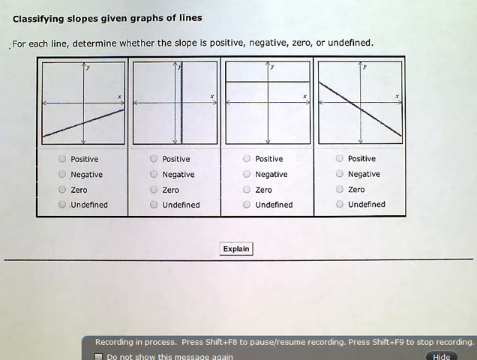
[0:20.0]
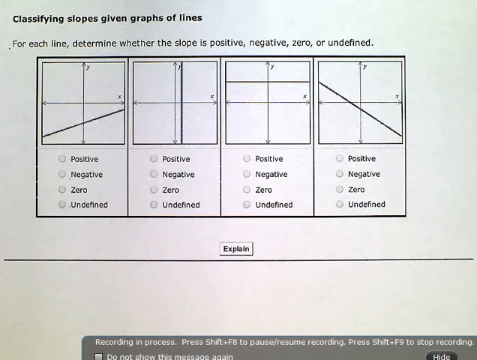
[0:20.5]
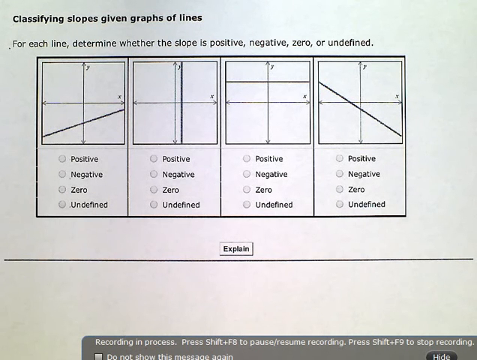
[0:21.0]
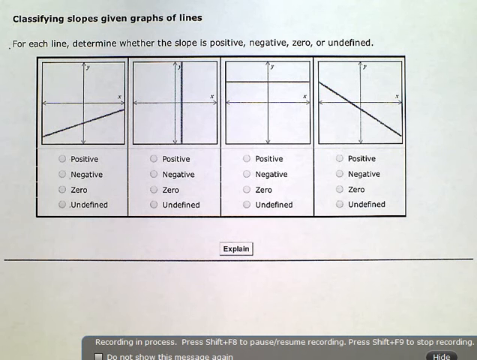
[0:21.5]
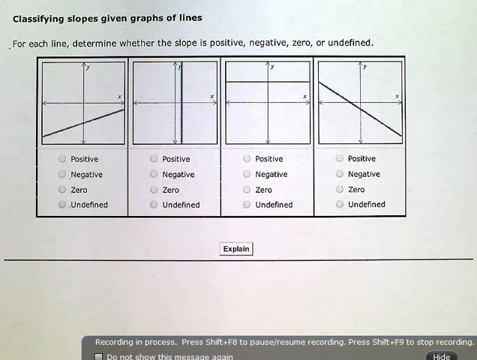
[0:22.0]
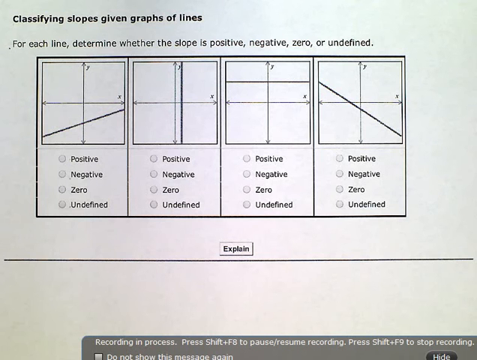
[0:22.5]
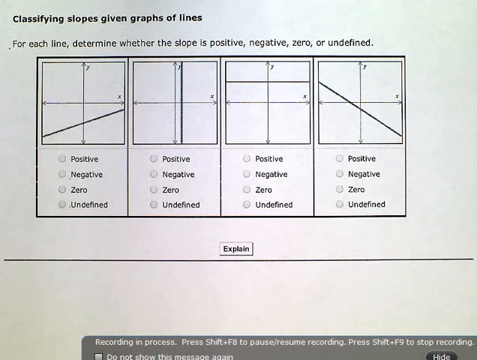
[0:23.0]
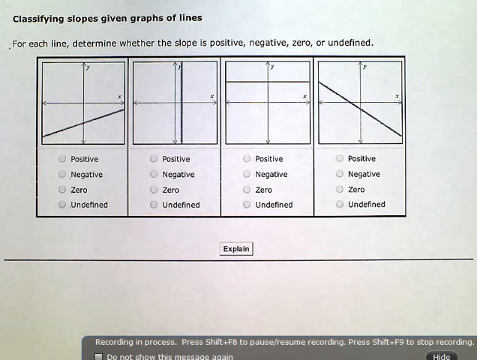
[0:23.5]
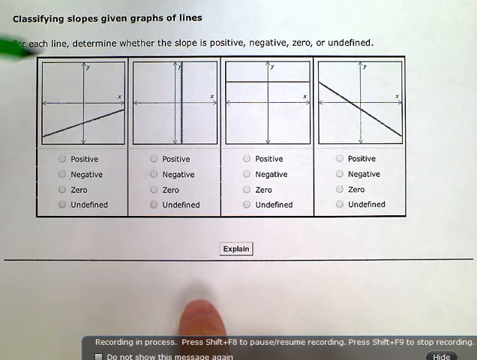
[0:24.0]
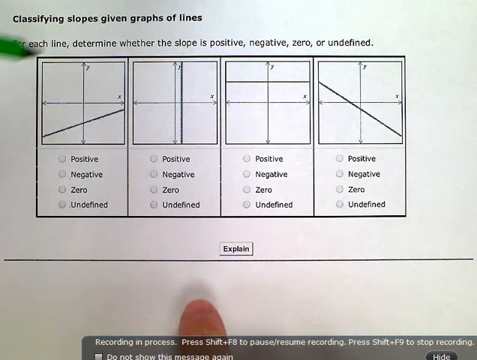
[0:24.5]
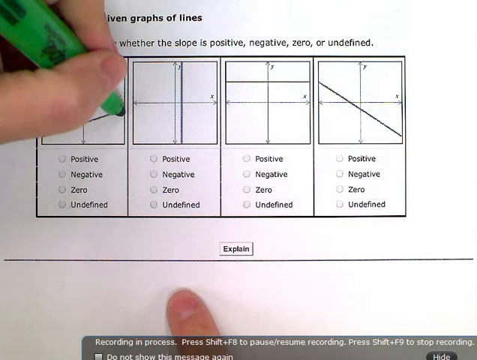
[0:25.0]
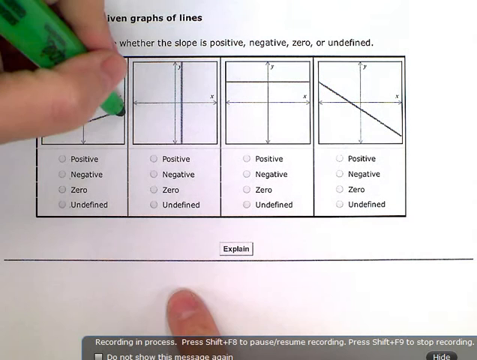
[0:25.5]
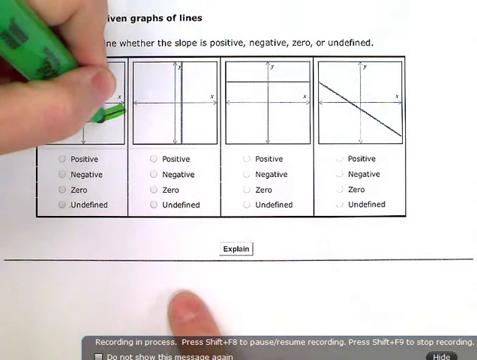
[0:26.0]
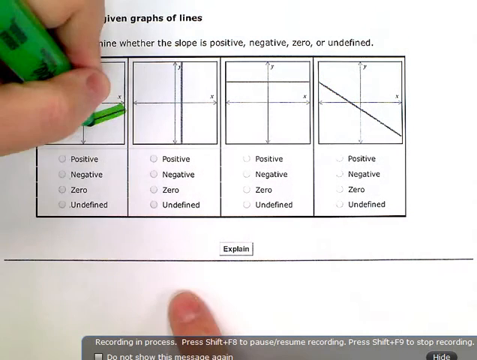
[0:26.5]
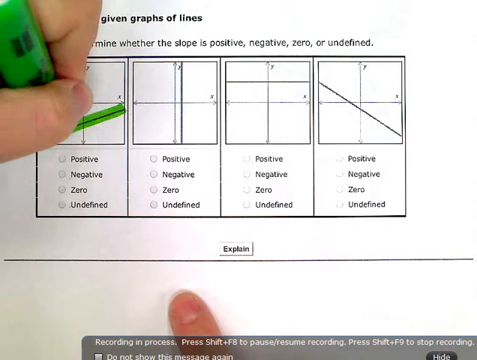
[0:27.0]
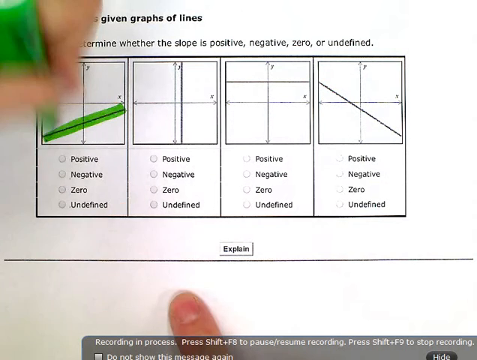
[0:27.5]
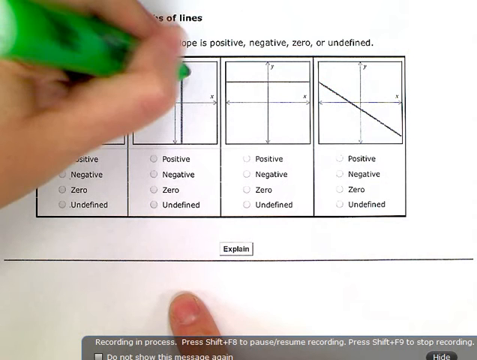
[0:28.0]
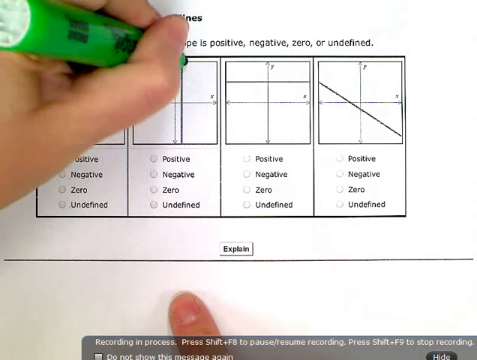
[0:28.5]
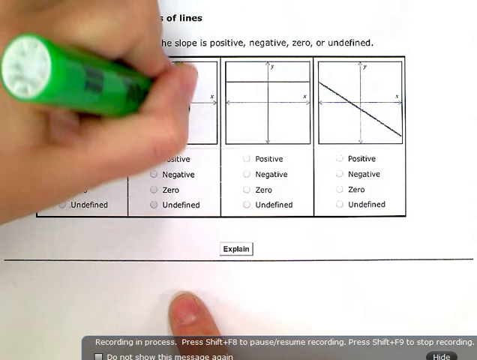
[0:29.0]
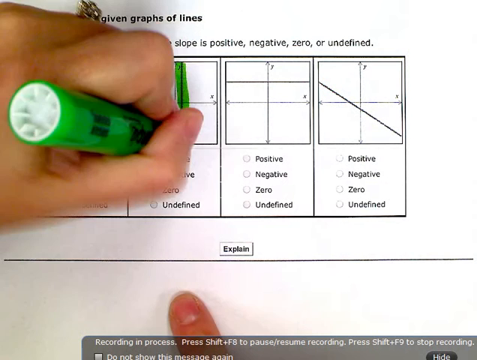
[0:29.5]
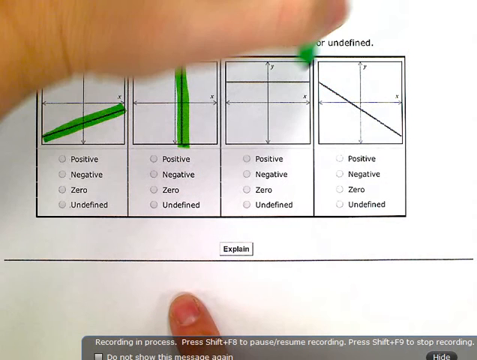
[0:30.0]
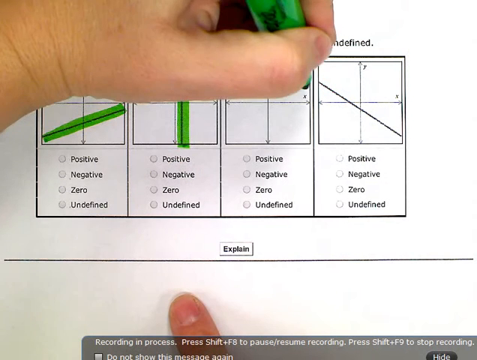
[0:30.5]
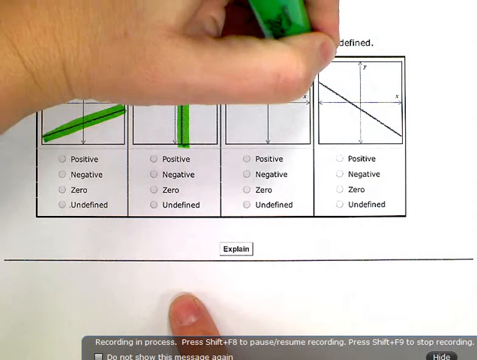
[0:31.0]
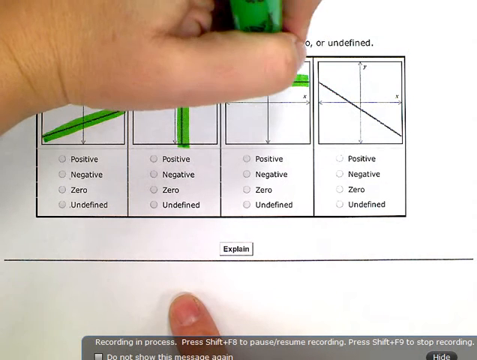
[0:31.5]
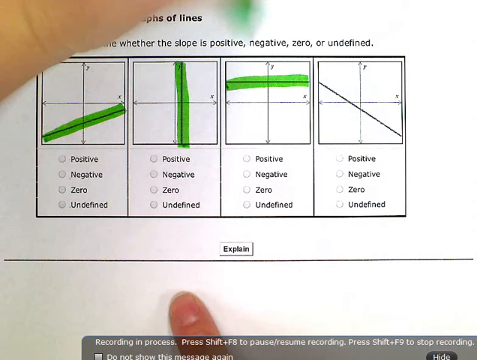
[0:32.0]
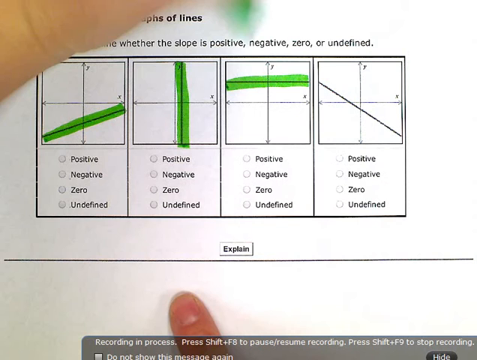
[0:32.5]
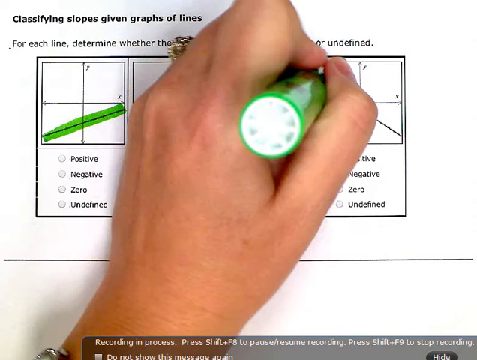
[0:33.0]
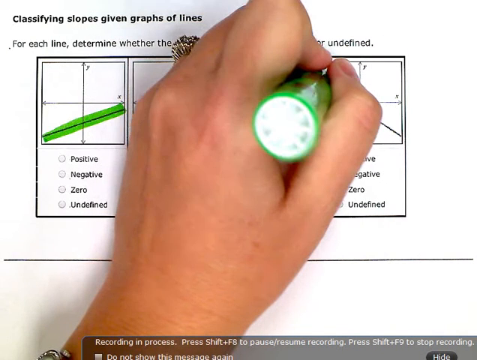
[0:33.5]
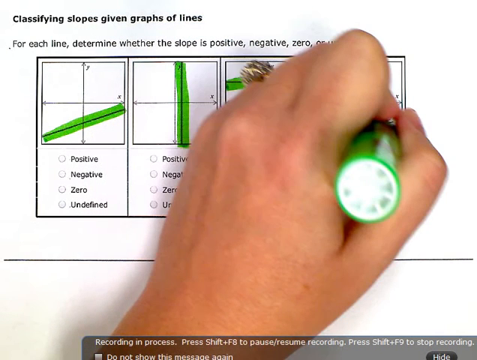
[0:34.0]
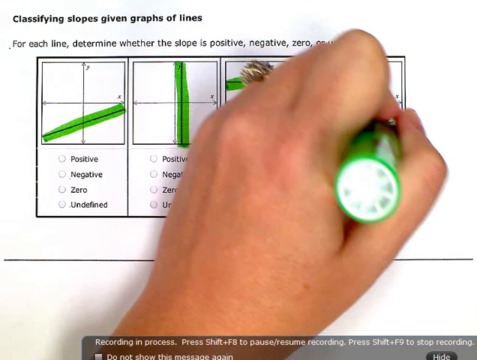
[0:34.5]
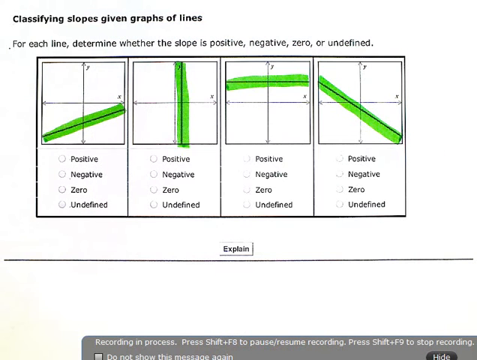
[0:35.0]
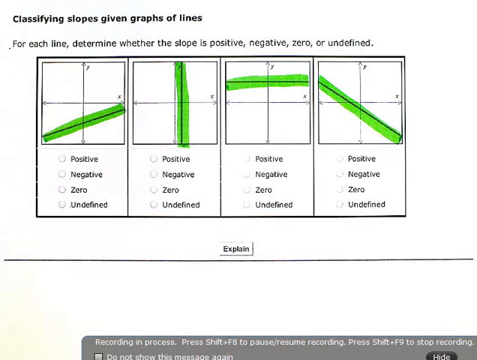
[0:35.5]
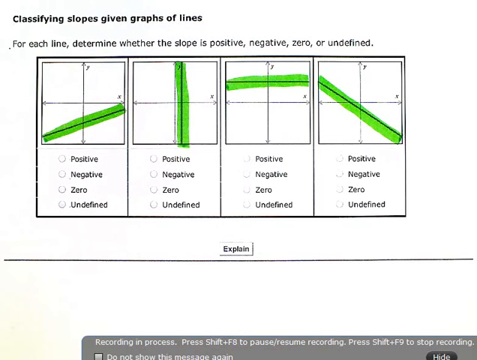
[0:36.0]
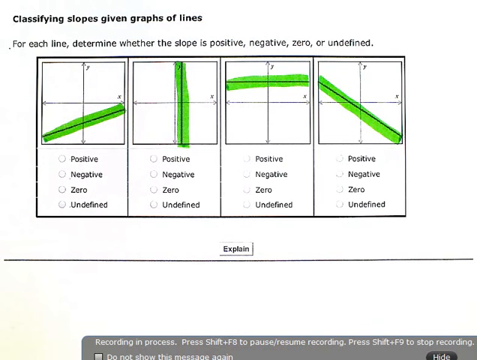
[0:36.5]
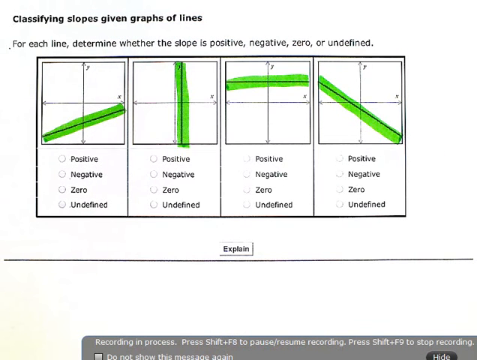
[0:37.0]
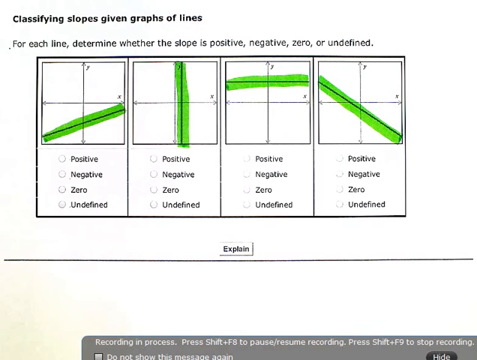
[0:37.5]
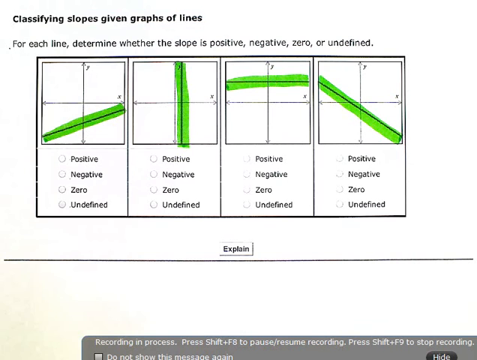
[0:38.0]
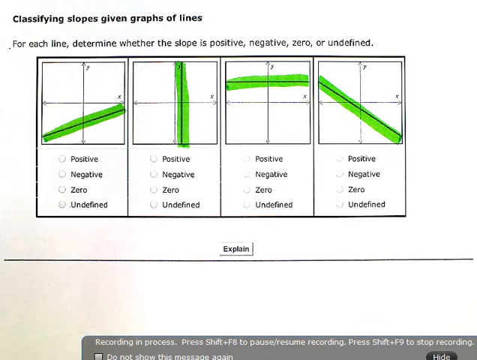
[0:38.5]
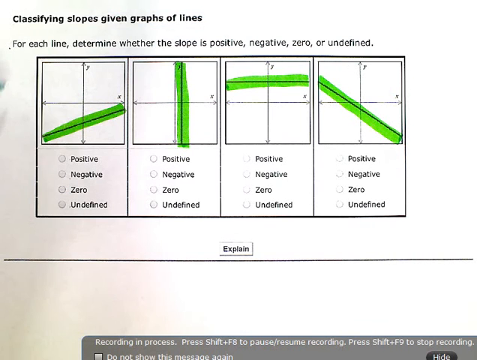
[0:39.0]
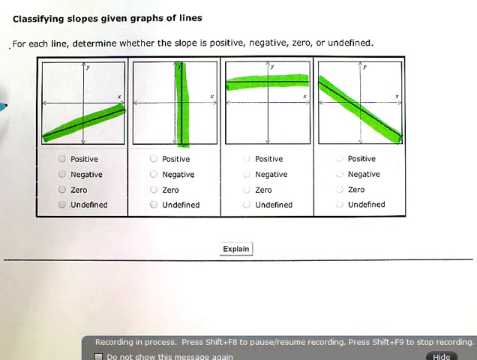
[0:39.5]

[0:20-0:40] A page with the heading "Classifying slopes given graphs of lines" shows a rectangular box divided into four sections, each with a different line in a four-gridded box. Underneath these boxes are the words positive, negative, zero, or undefined; the page seems to be teaching how to determine whether a slope is positive, negative, zero, or undefined. A hand, apparently a child's, holds a green highlighter pen and highlights the first line on the left, then each of the following lines, until all four lines are highlighted. The page is white with all of the writing in black, and underneath the rectangular box is a tab that says "EXPLAIN".